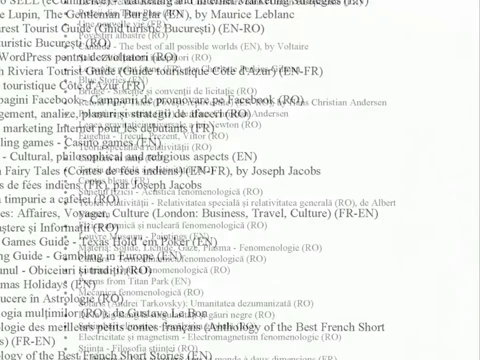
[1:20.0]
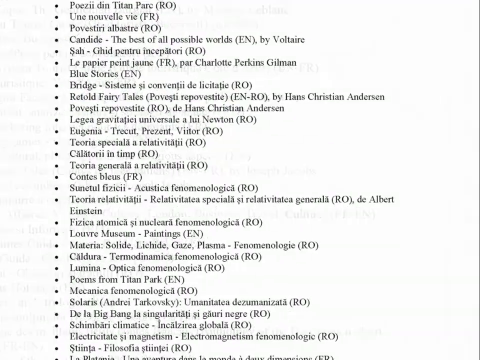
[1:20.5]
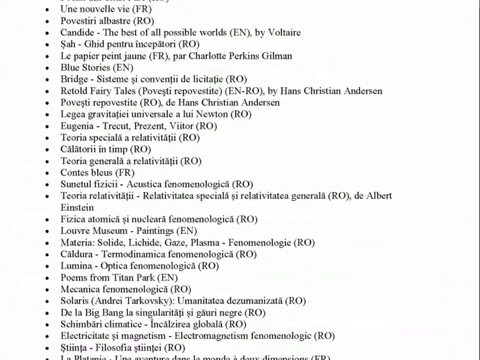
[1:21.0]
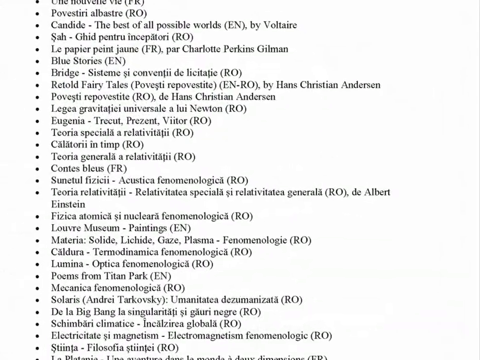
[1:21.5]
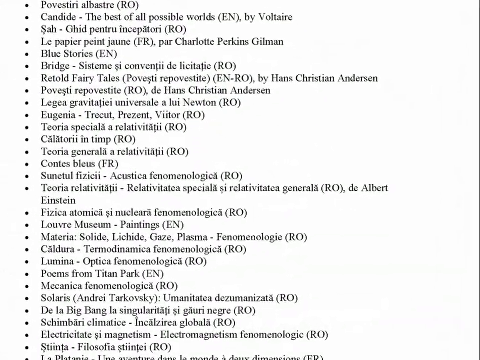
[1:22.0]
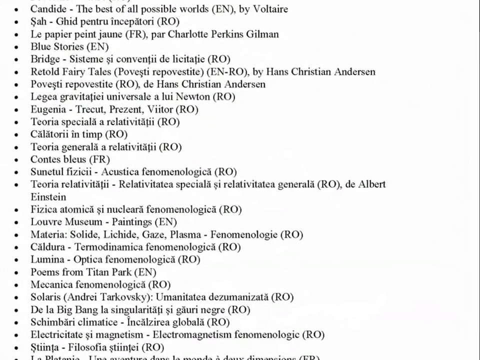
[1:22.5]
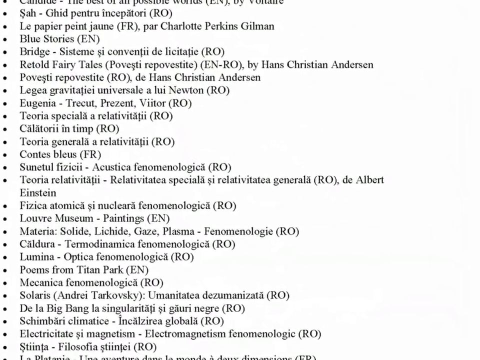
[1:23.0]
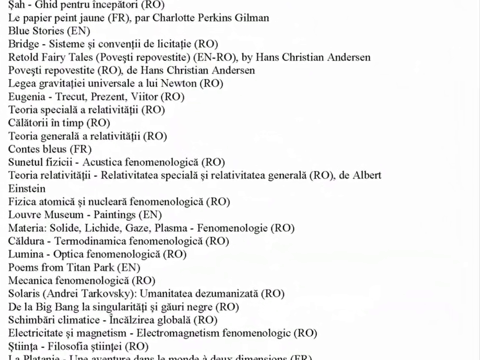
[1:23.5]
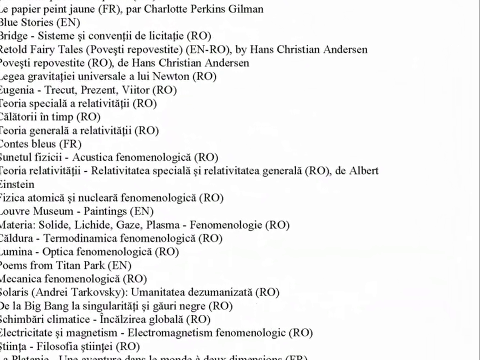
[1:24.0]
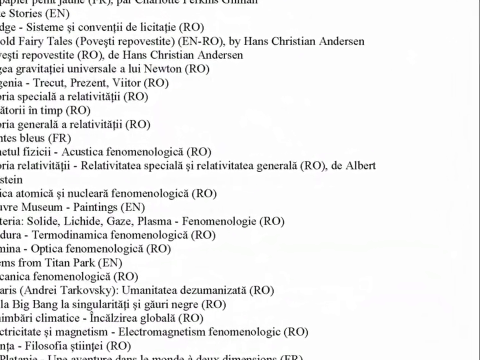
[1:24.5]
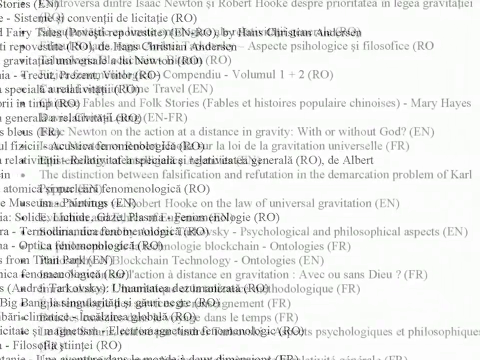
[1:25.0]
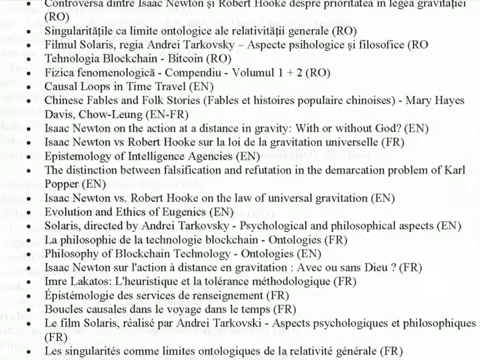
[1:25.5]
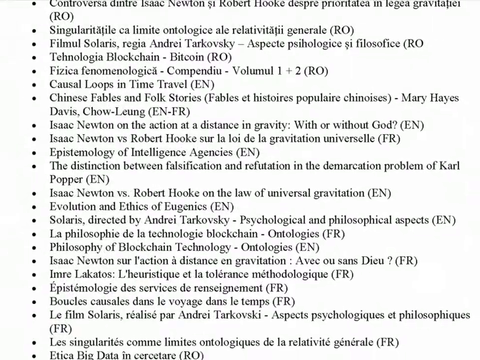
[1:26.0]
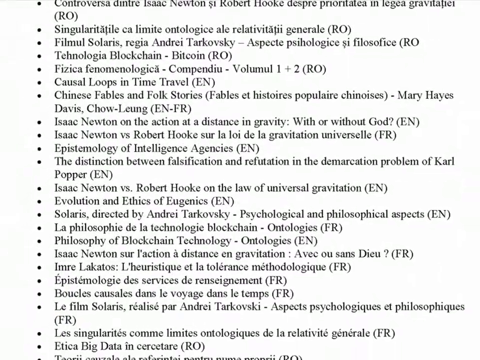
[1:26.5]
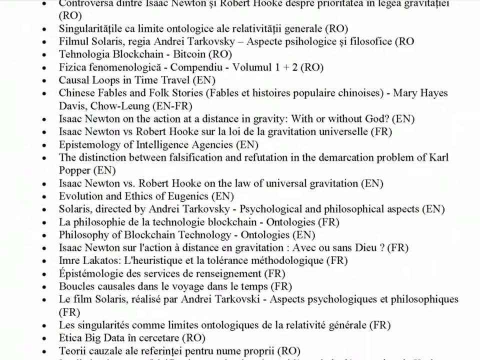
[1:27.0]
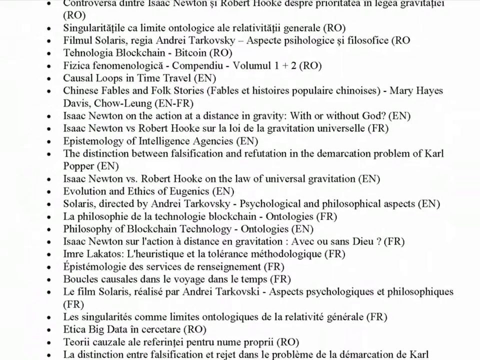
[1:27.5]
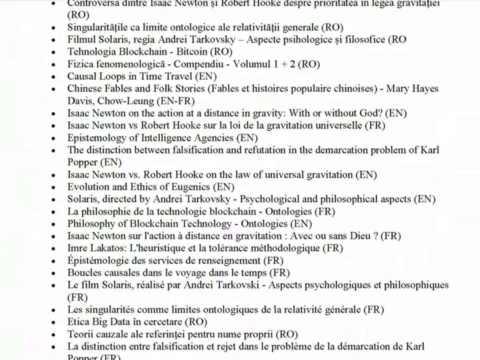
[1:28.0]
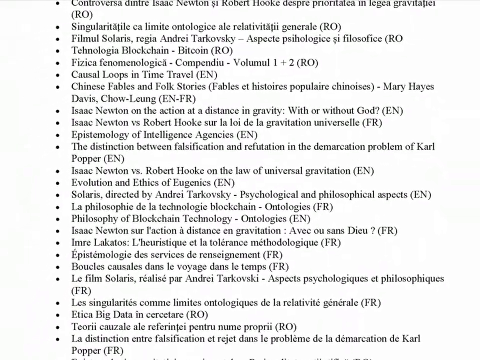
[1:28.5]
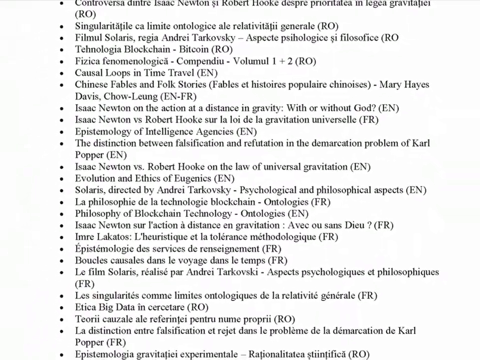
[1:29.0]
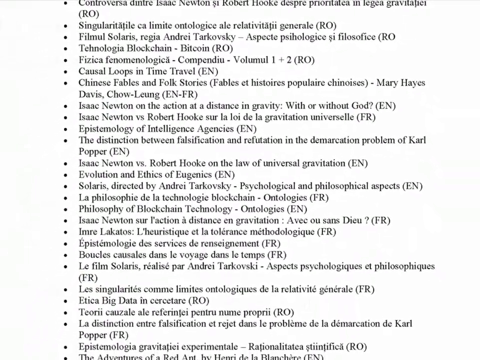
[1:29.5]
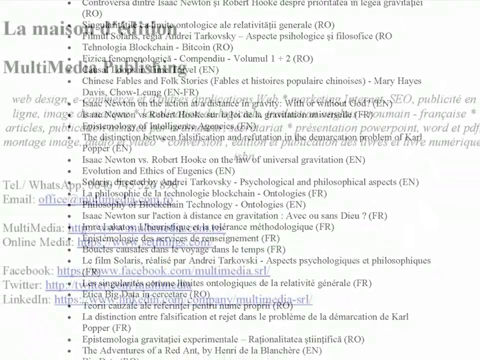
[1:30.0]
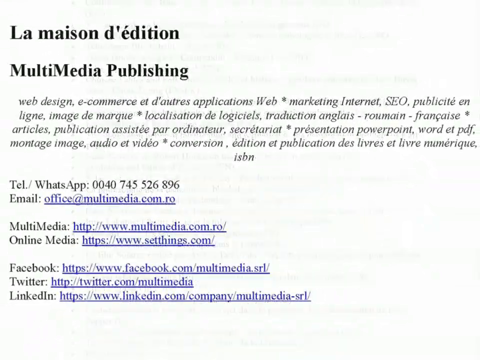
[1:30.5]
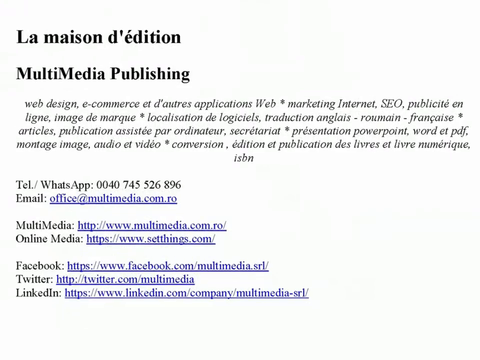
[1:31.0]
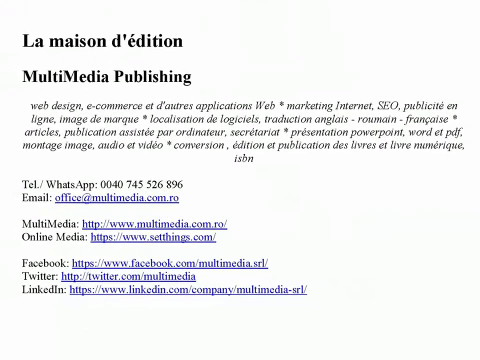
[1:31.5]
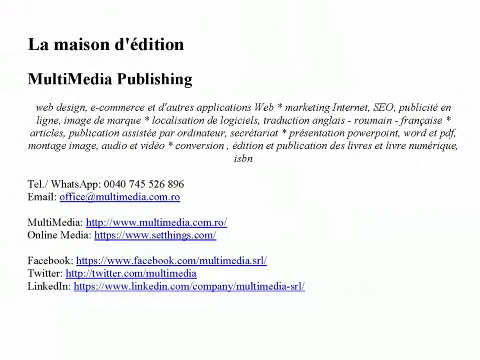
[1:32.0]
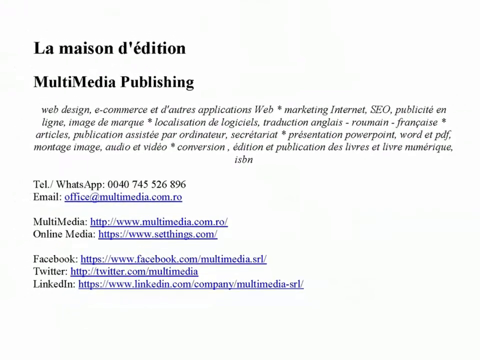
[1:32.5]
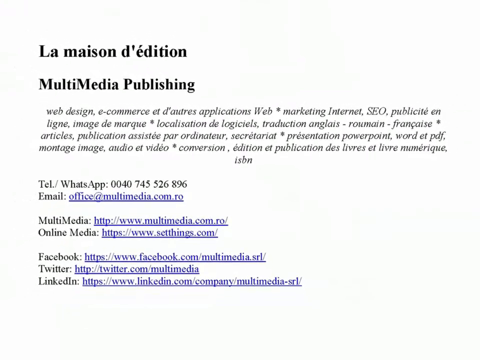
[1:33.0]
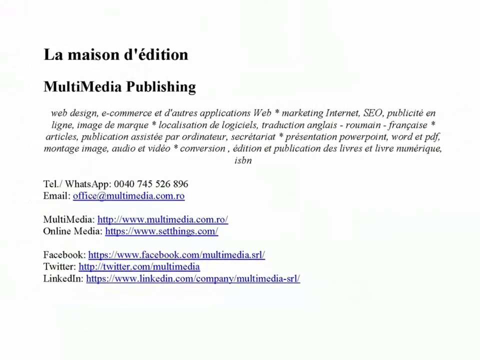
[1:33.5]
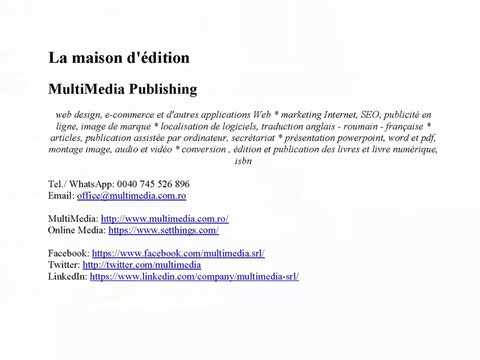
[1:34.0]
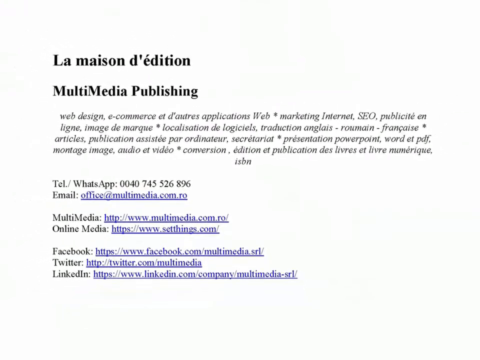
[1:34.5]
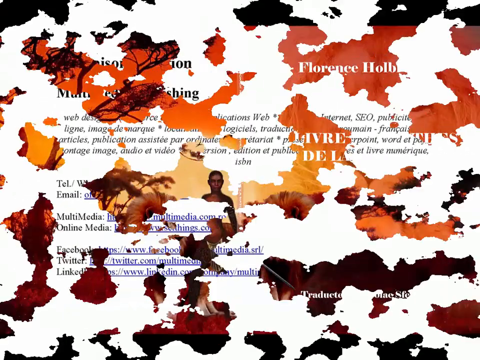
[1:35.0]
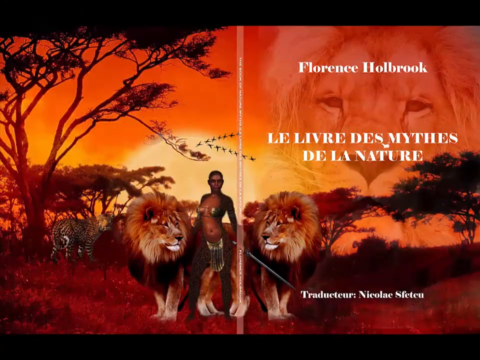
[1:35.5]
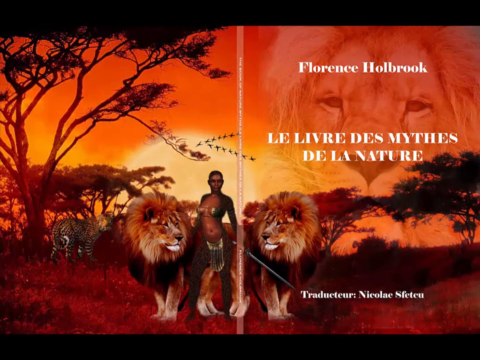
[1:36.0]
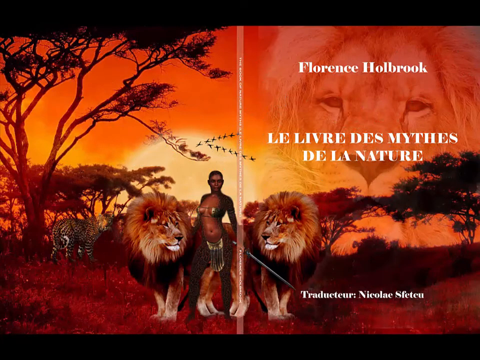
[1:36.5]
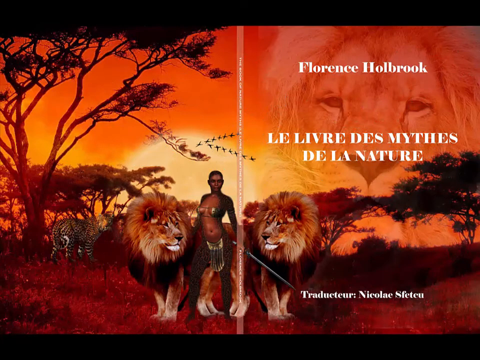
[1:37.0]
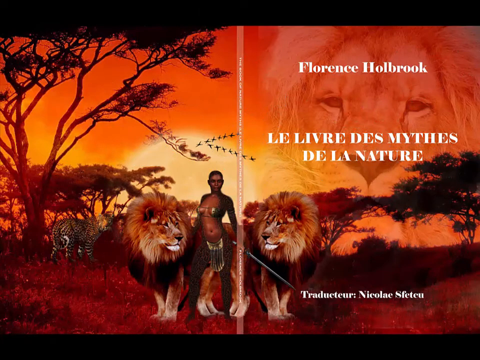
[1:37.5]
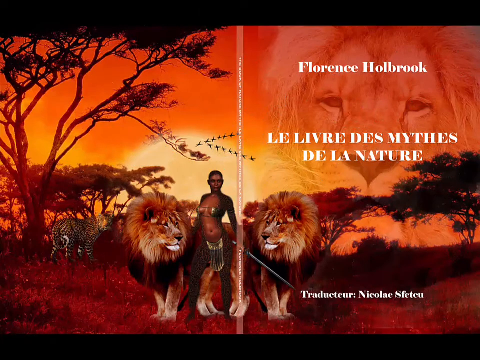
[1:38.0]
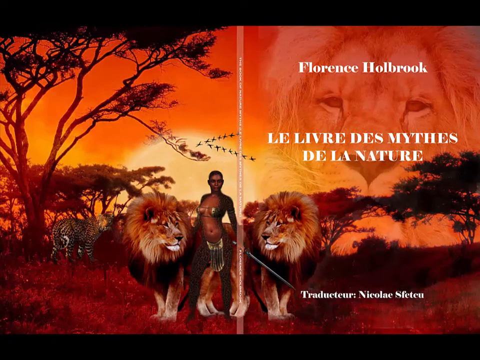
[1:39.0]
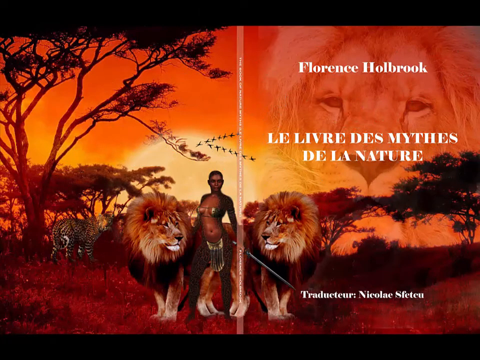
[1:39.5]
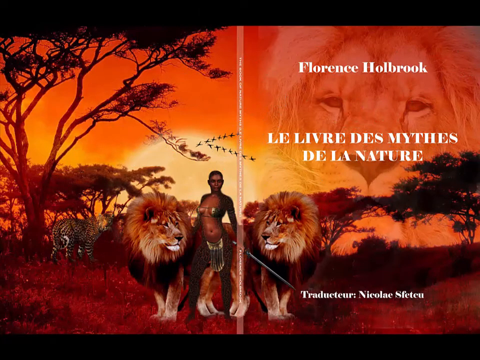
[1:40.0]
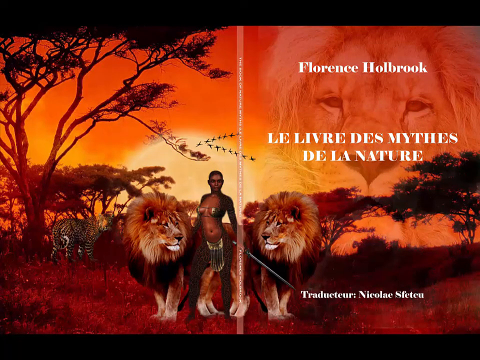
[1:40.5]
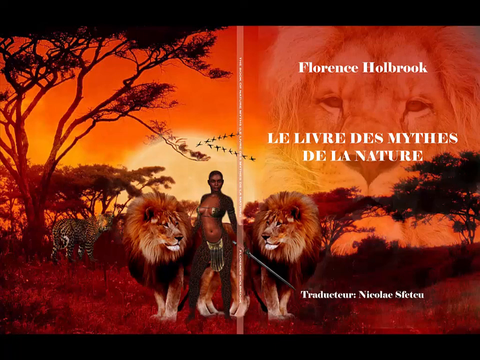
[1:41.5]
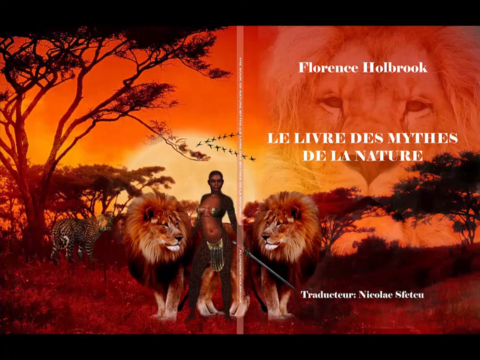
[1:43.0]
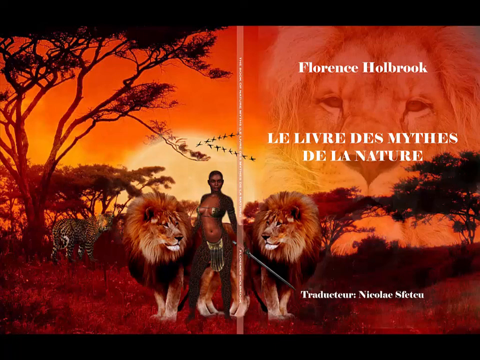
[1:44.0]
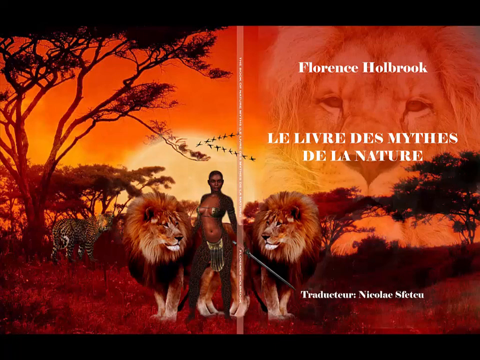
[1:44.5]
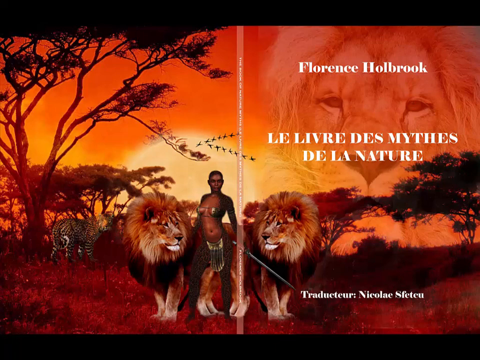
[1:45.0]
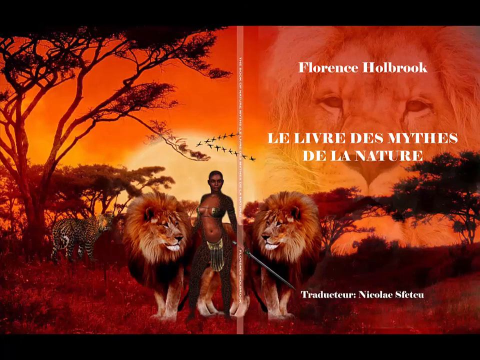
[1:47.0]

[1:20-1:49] Another page full of points with text next to them is shown, and the view zooms in and pans over to the right side of the page. A transition leads to another similar page full of points, which appear to be different scientific works, with the language of each work shown to the right of its title. Another transition shows a page that appears to be a contact page, with information about a publishing company, a telephone number, an email address, and various other websites. The video then transitions to the same book cover as before, with the woman standing between the two lions, and holds on this image for a while with little else happening. To the left side of the lions there appears to be perhaps a cheetah or a tiger, orange with dark spots and stripes. It stands with its right side to the camera, appears to be looking toward the right, and has its tail curled up behind it. The image stays on screen until the video ends.